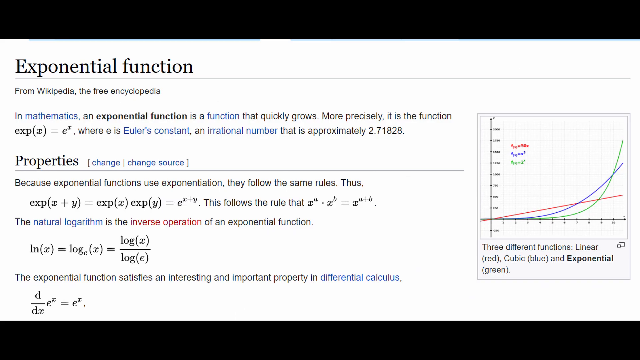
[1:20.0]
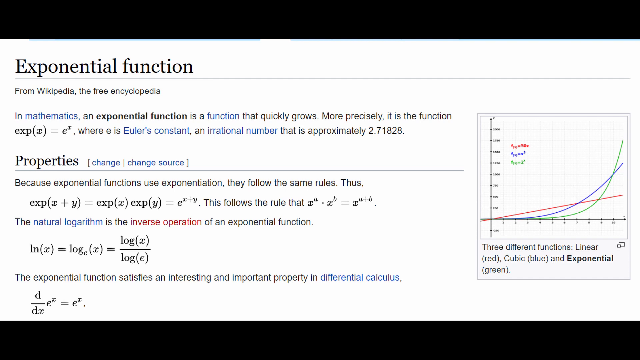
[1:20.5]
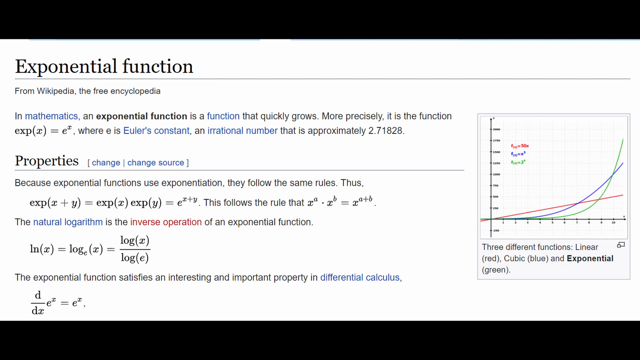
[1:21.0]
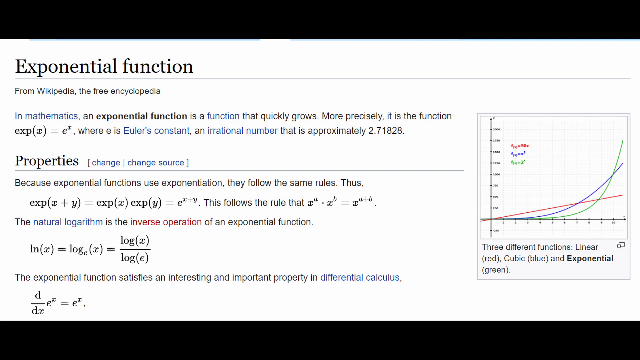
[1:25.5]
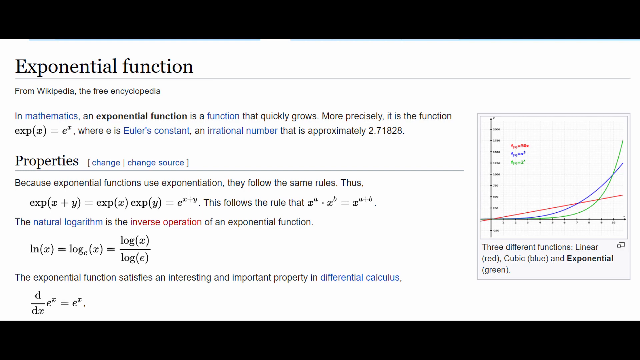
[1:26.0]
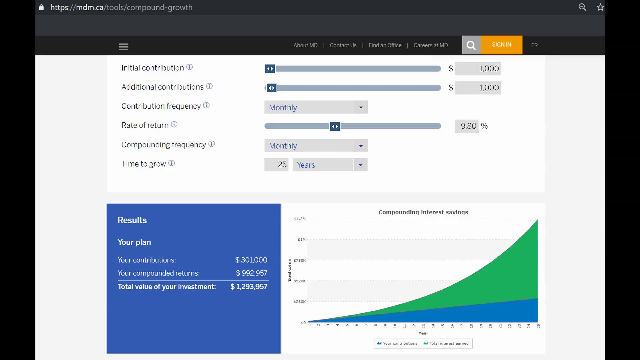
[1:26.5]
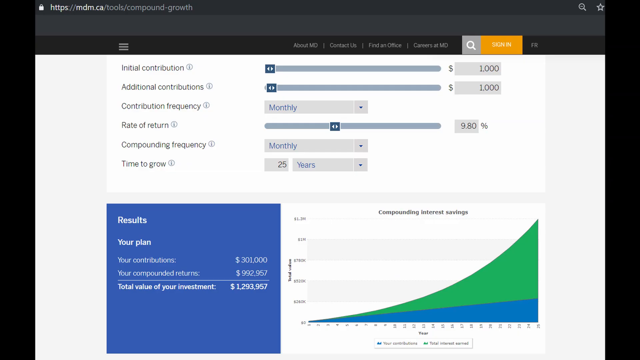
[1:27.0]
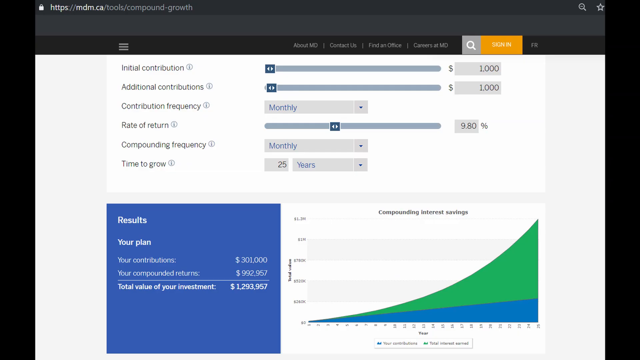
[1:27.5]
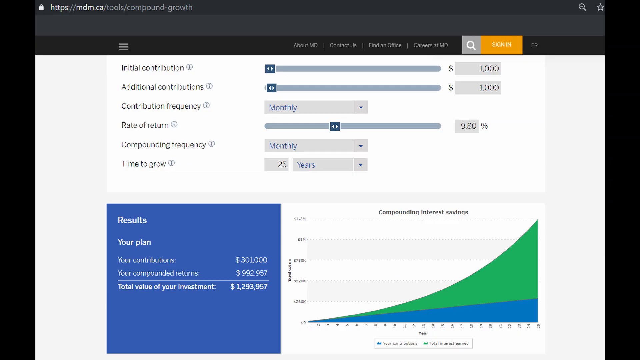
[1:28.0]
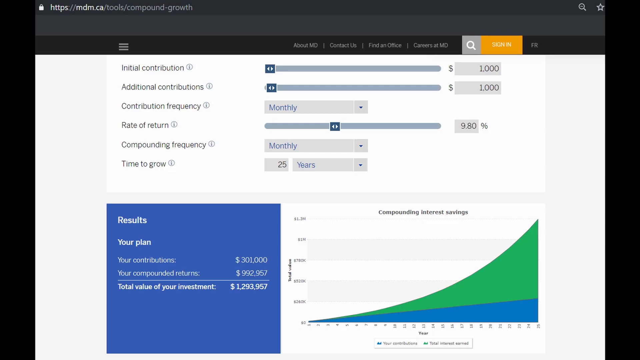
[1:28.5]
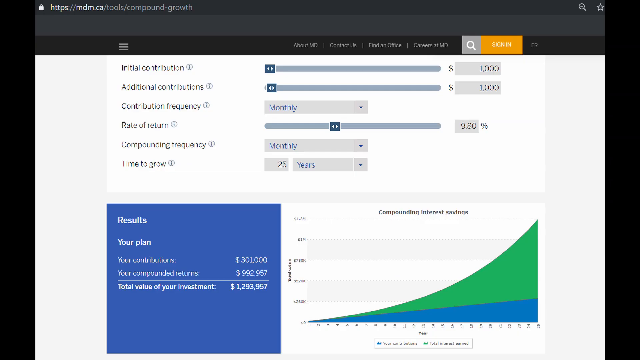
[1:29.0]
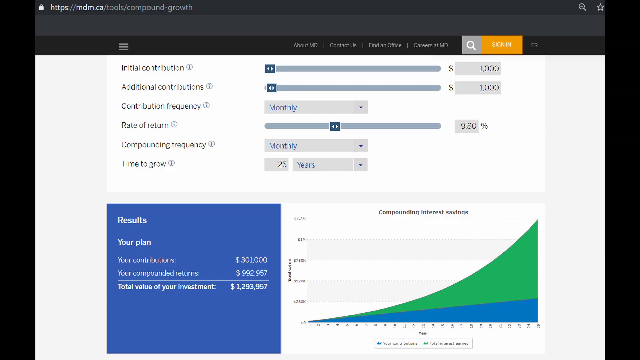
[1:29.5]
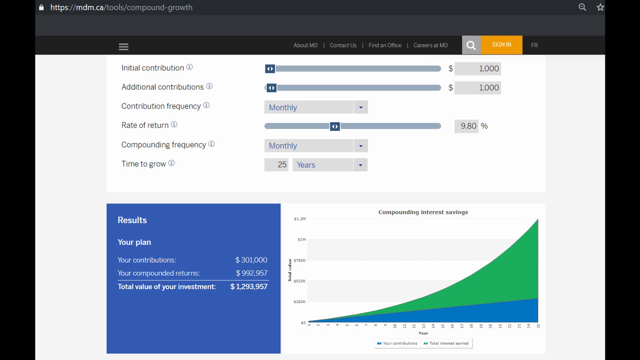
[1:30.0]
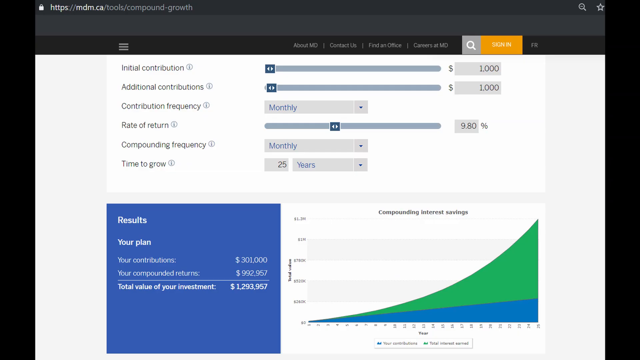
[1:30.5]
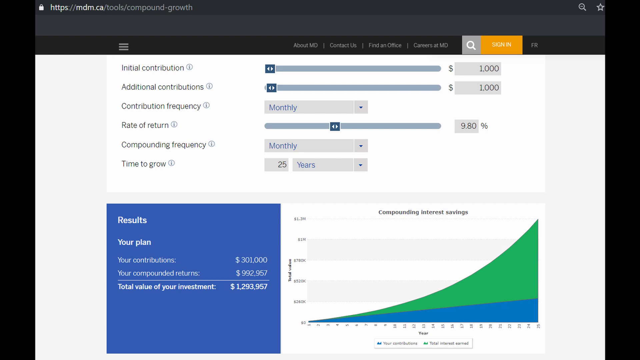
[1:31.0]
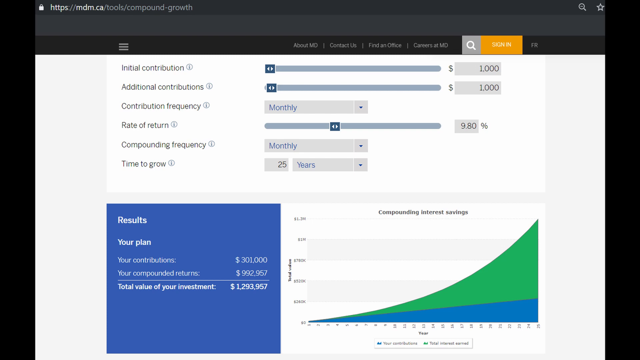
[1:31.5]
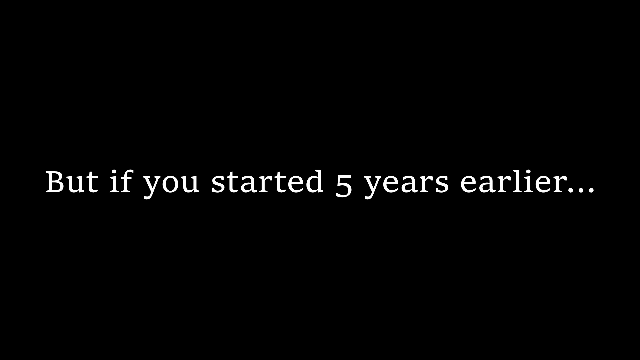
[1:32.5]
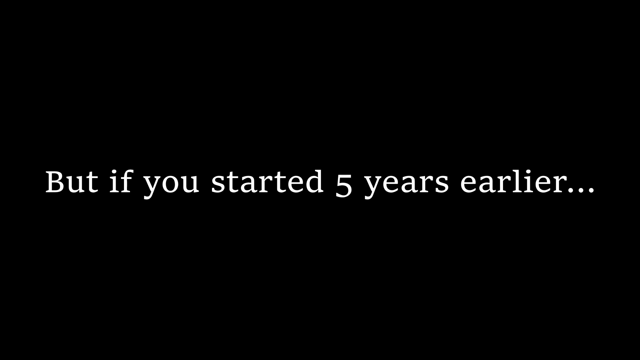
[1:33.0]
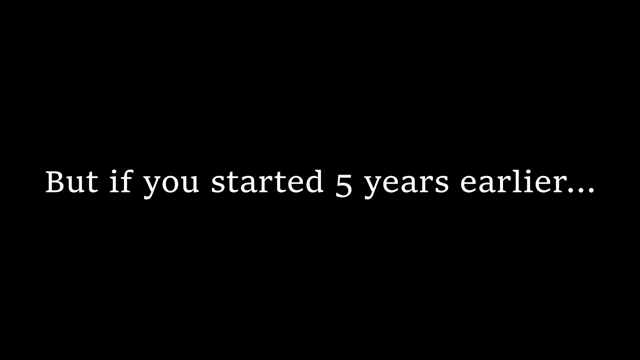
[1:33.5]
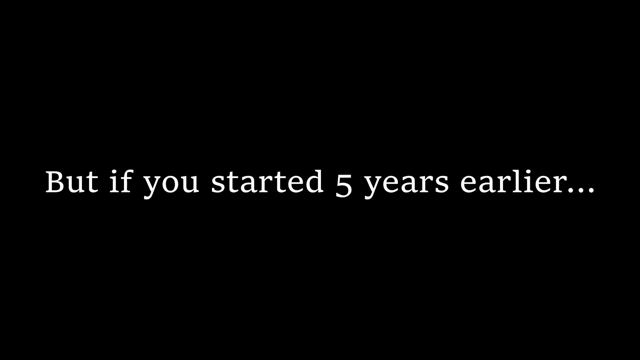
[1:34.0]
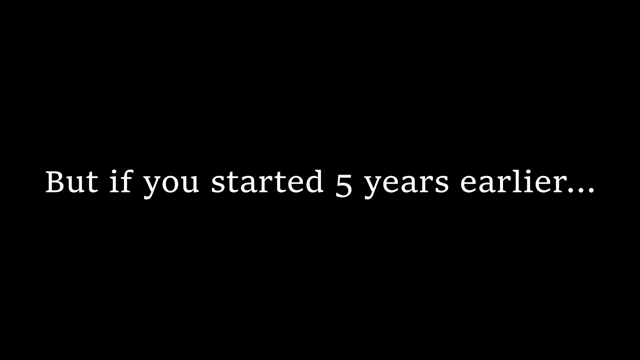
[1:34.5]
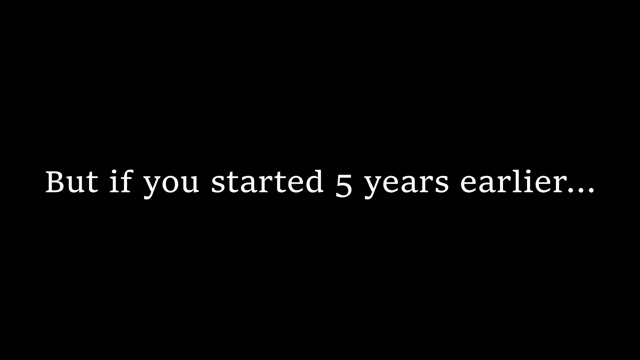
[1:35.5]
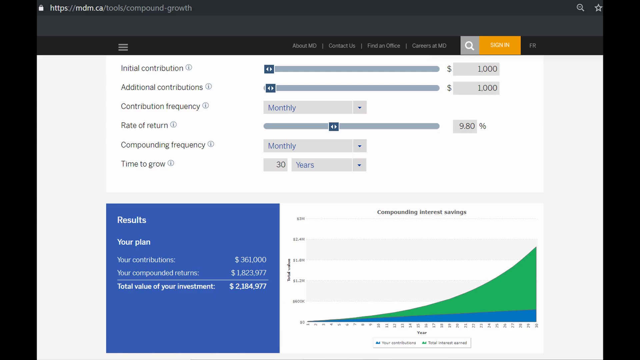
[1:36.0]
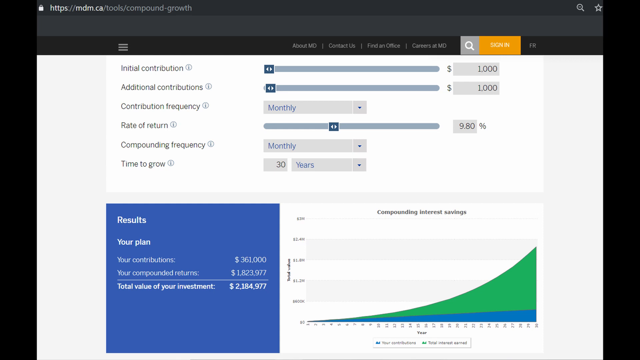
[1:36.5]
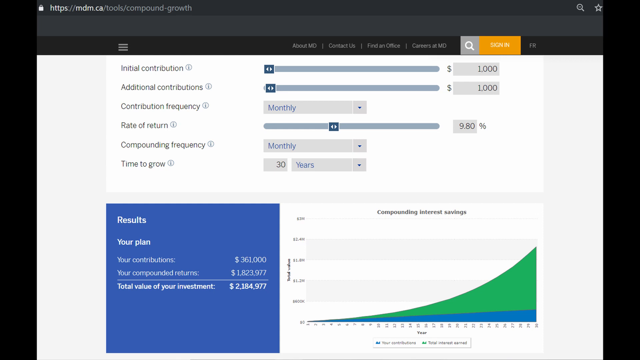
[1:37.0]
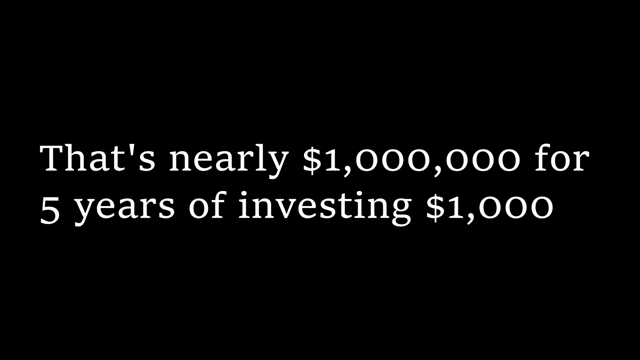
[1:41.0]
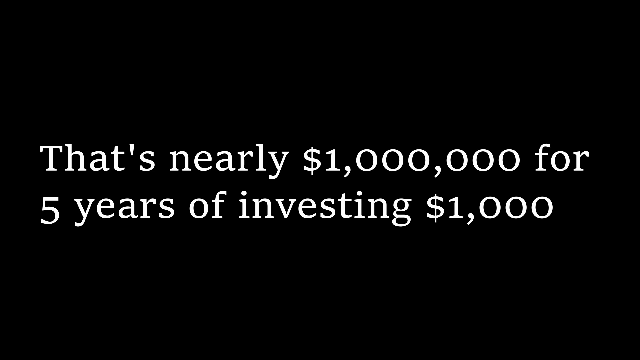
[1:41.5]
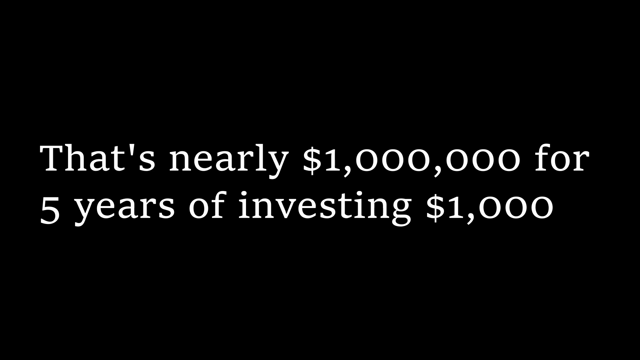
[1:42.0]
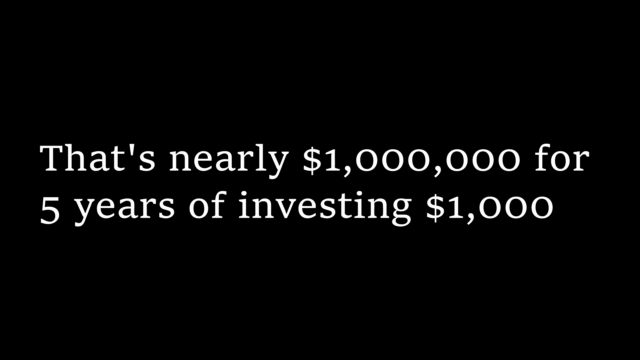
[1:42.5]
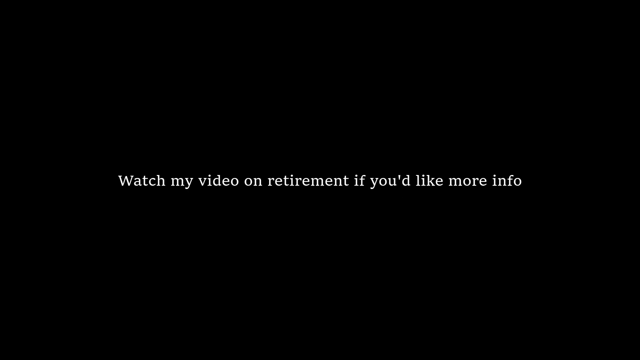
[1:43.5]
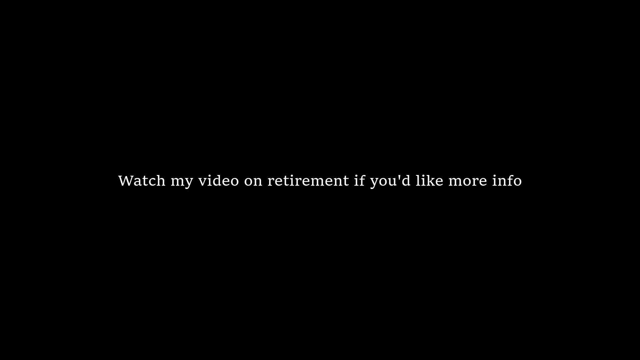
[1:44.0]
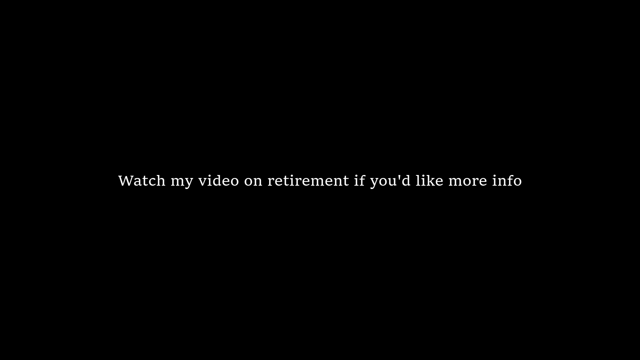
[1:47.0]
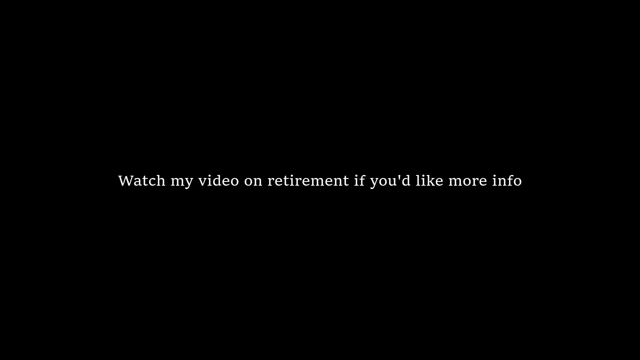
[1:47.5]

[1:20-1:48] The Wikipedia page about the exponential function remains on screen. Its brief description refers to "the Euler's constant" and to a number that is approximately 2.71828. The previous website returns, showing the parameters that configure the blue and green graph. The values seem to have been edited, since different amounts now appear, with a result of 1 million and 200 thousand dollars. Text then appears on the screen: "But if you started 5 years earlier..." Back on the same website, the final result this time is over 2 million dollars. Text on screen then reads "That's nearly $1,000,000 for 5 years of investing $1,000." The video ends with text on screen that says "Watch my video on retirement if you'd like more info."